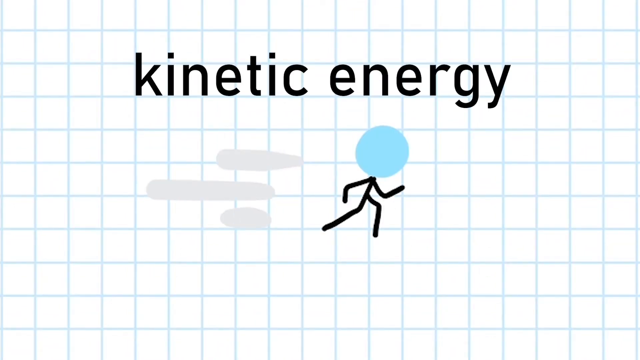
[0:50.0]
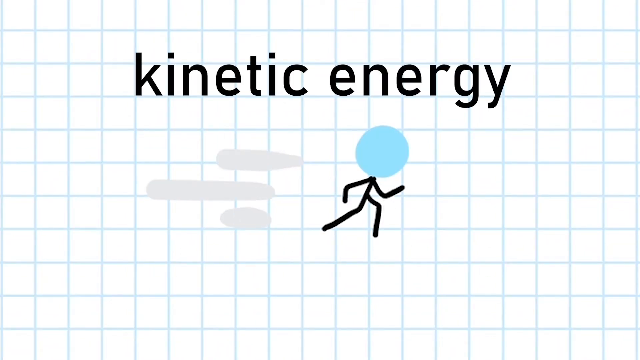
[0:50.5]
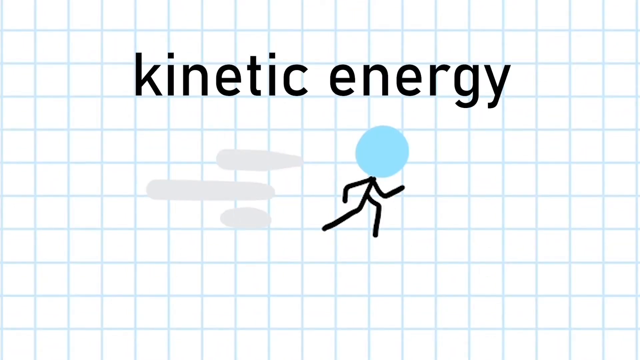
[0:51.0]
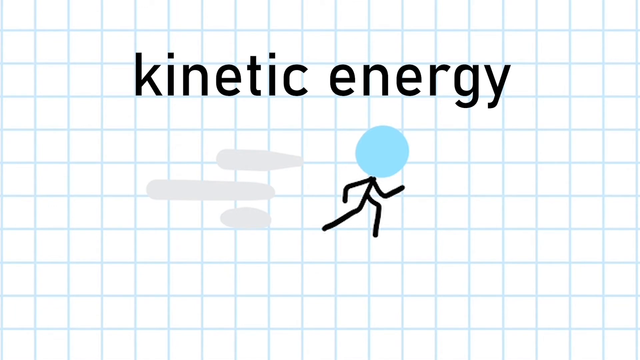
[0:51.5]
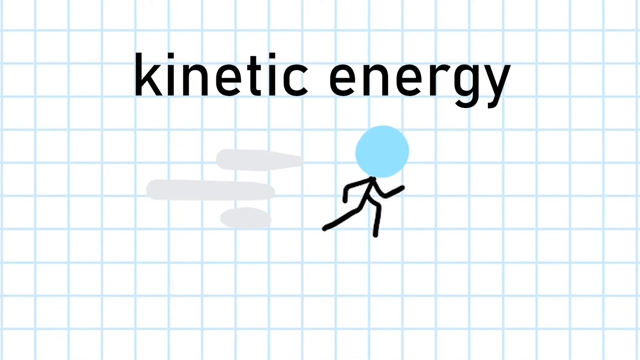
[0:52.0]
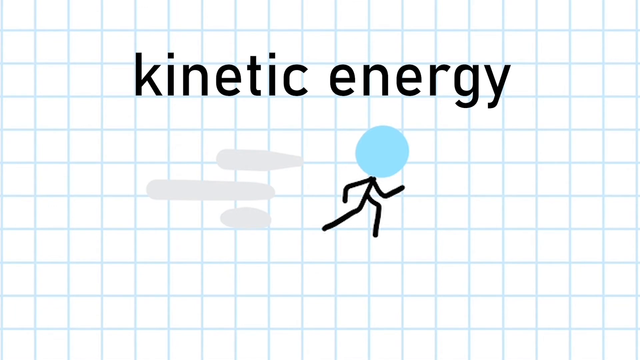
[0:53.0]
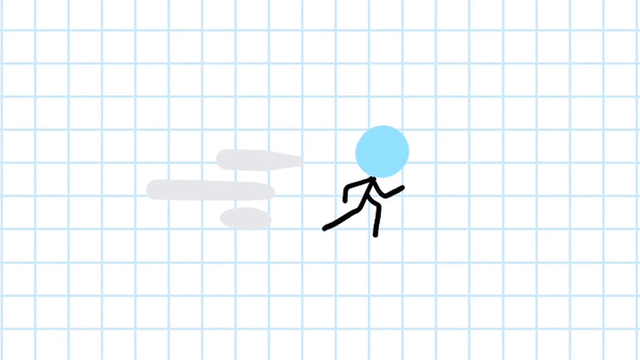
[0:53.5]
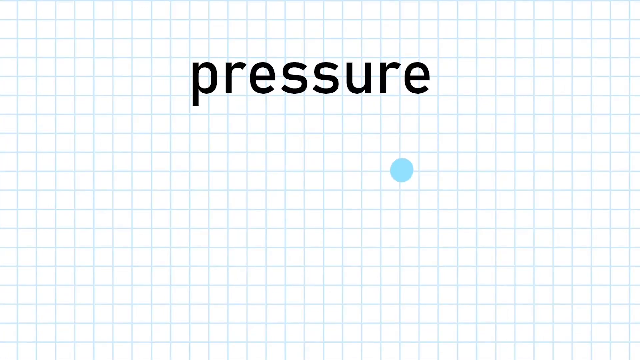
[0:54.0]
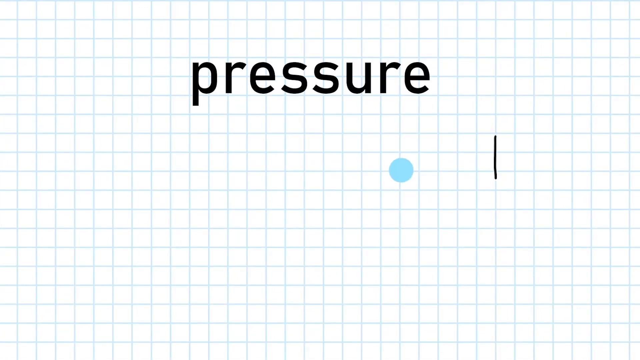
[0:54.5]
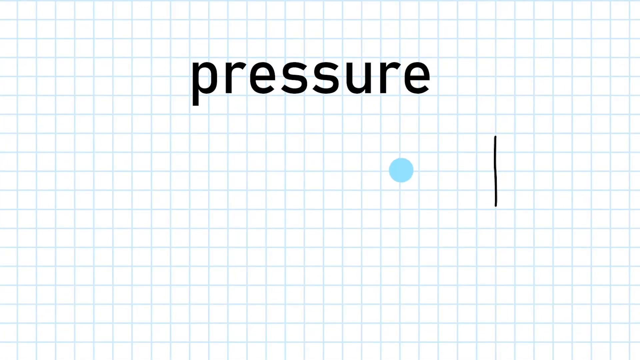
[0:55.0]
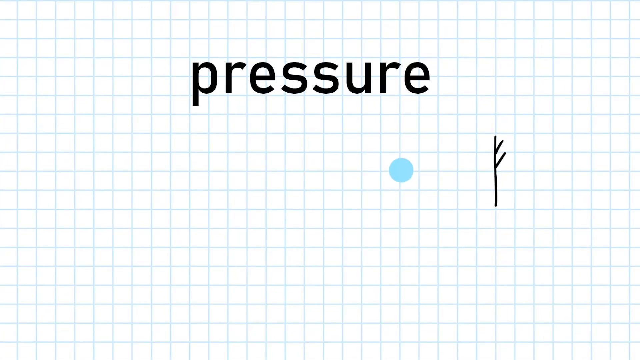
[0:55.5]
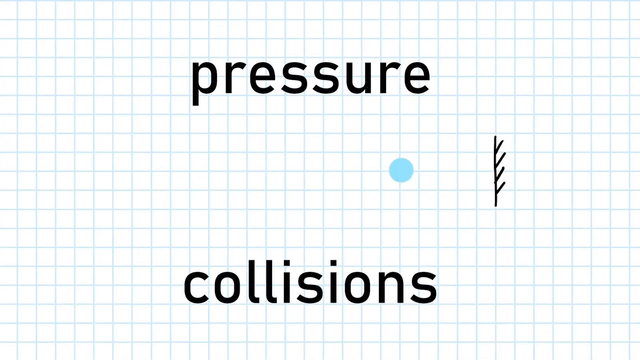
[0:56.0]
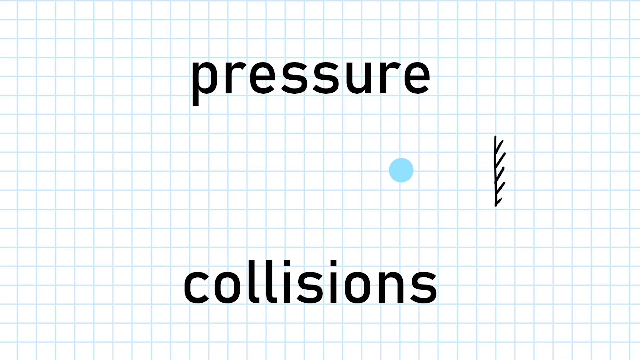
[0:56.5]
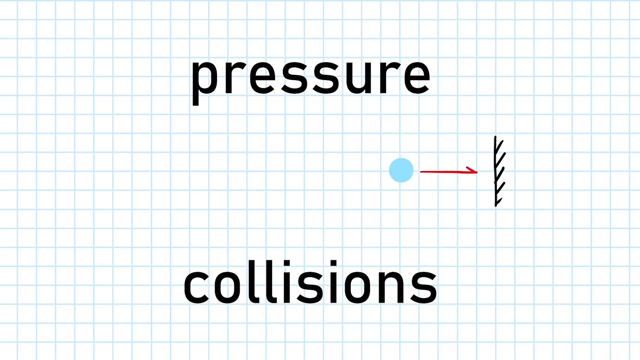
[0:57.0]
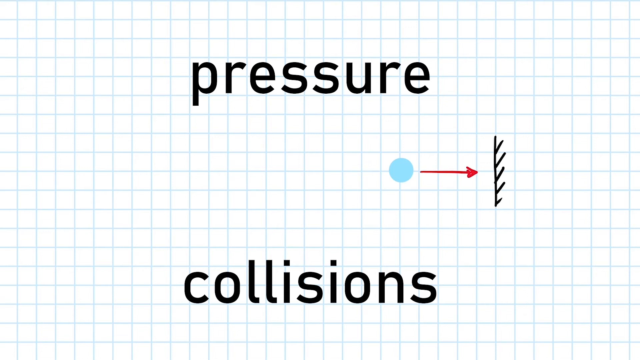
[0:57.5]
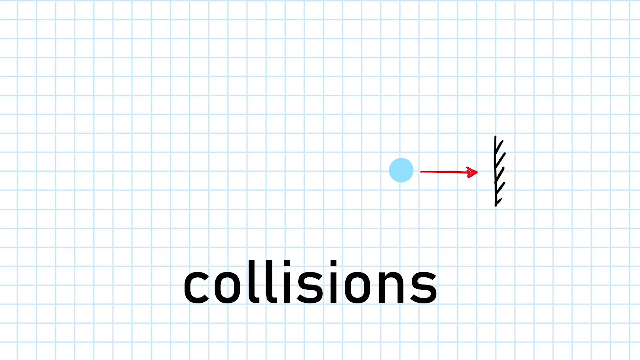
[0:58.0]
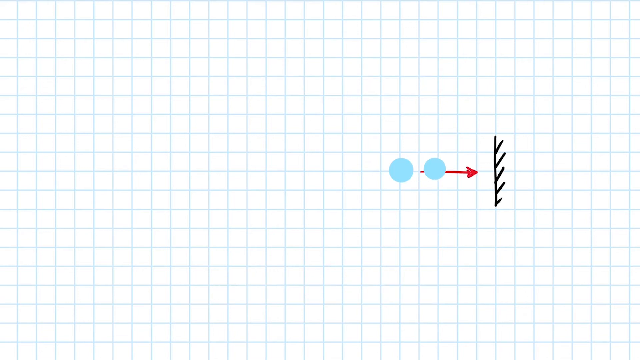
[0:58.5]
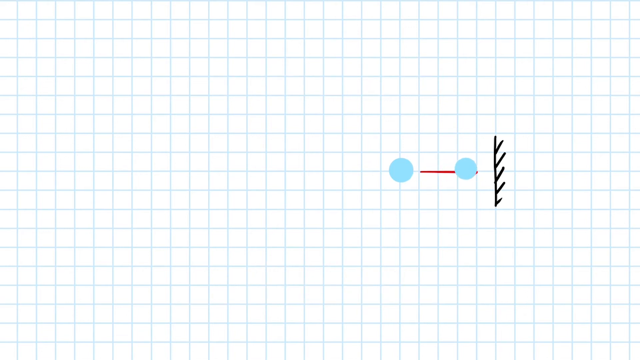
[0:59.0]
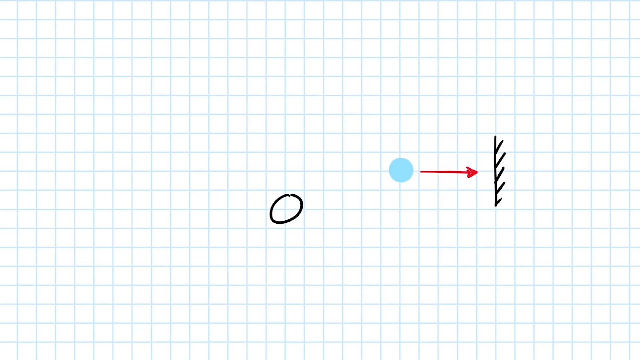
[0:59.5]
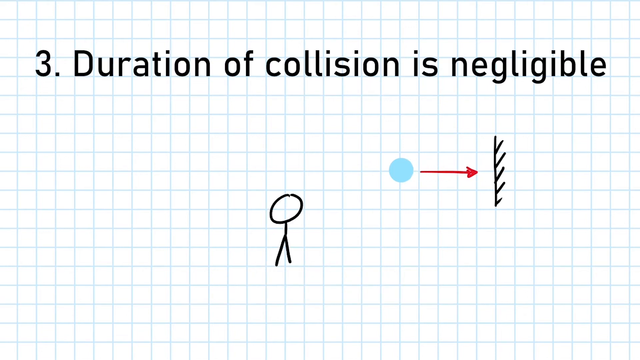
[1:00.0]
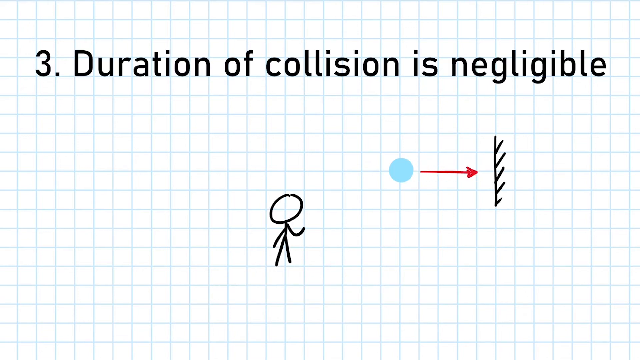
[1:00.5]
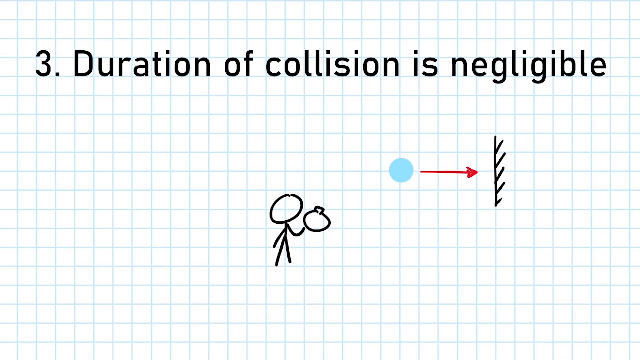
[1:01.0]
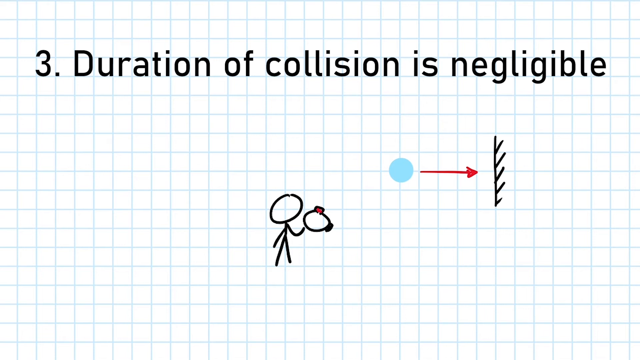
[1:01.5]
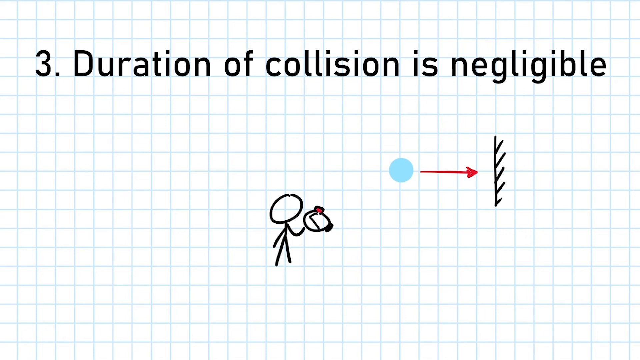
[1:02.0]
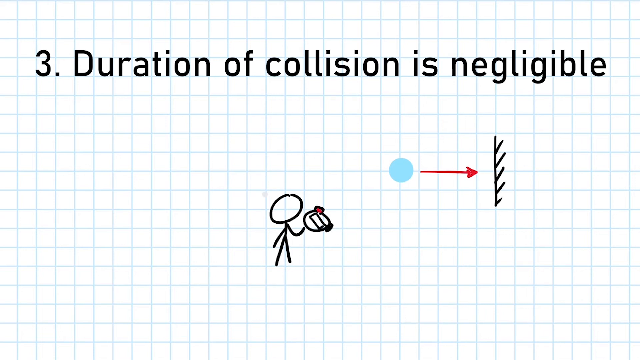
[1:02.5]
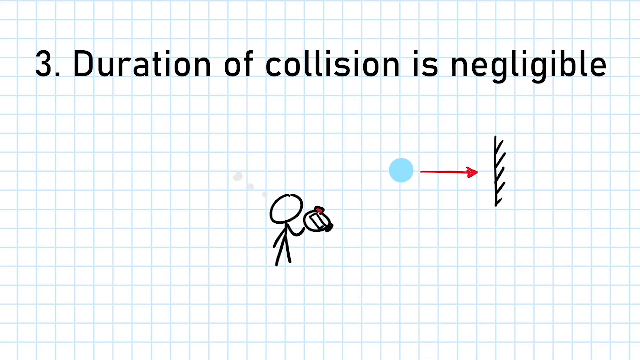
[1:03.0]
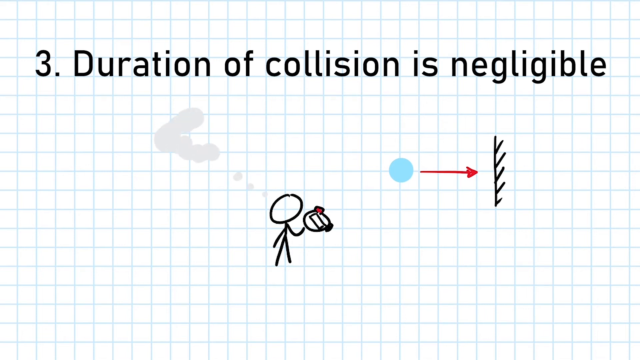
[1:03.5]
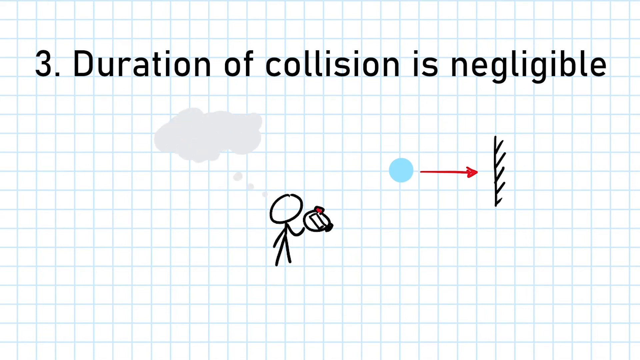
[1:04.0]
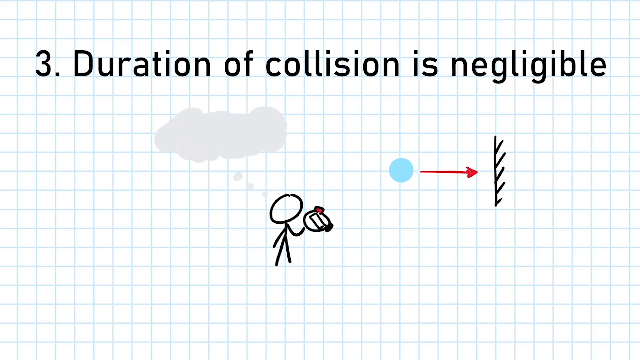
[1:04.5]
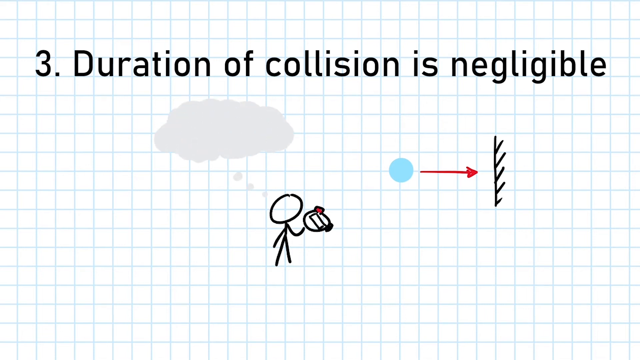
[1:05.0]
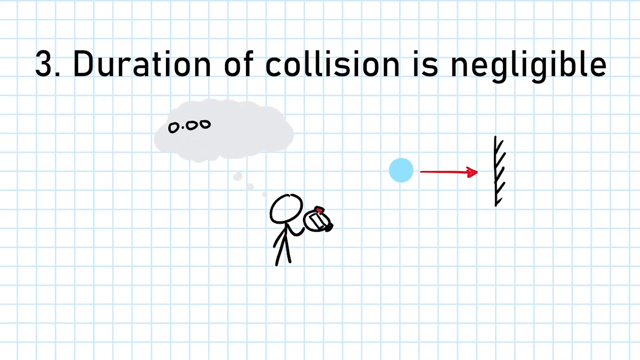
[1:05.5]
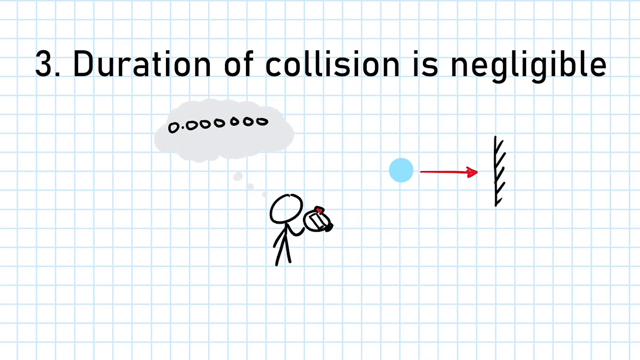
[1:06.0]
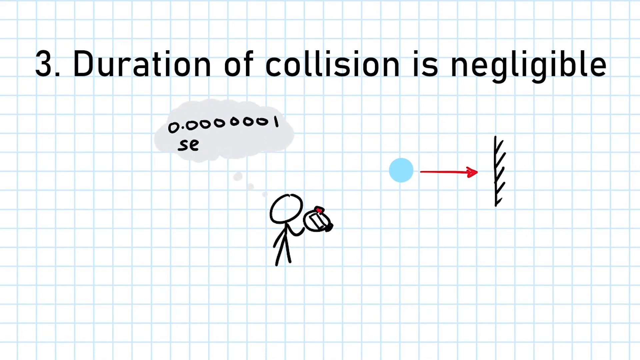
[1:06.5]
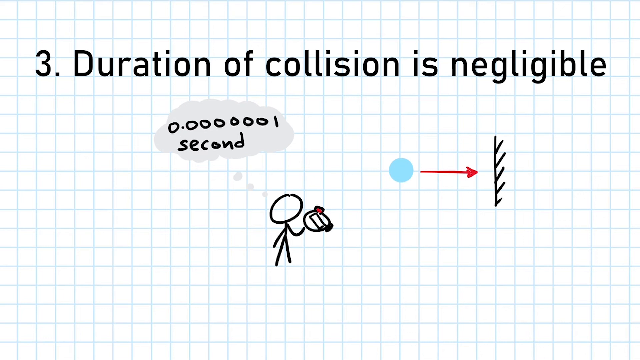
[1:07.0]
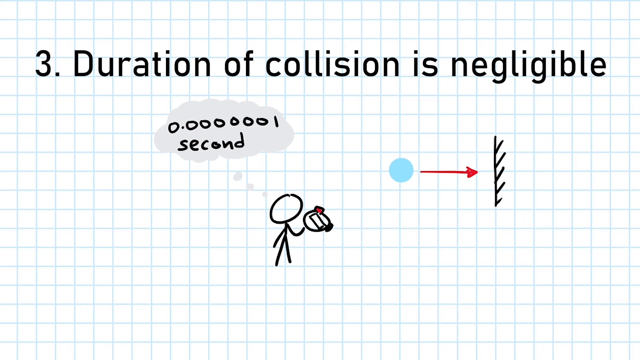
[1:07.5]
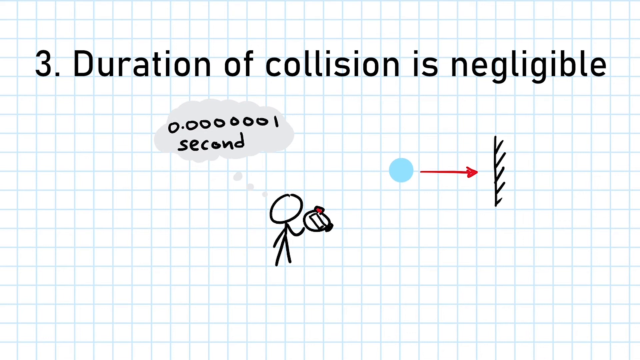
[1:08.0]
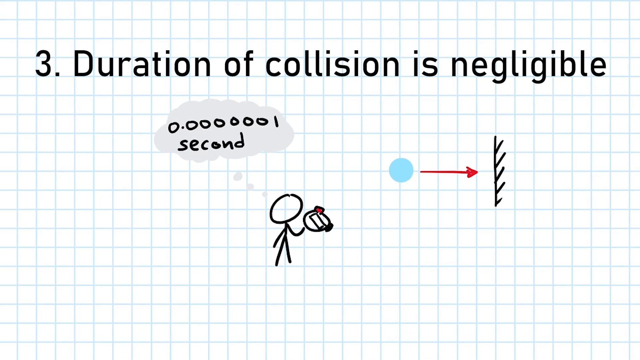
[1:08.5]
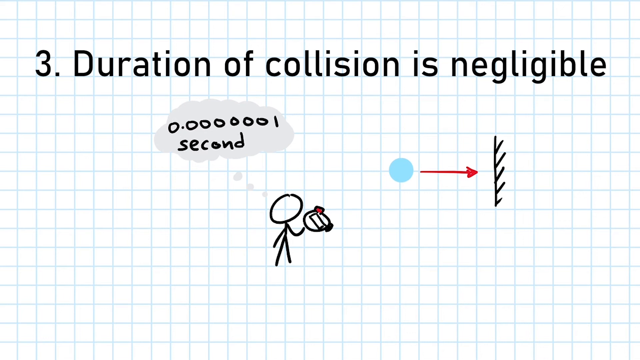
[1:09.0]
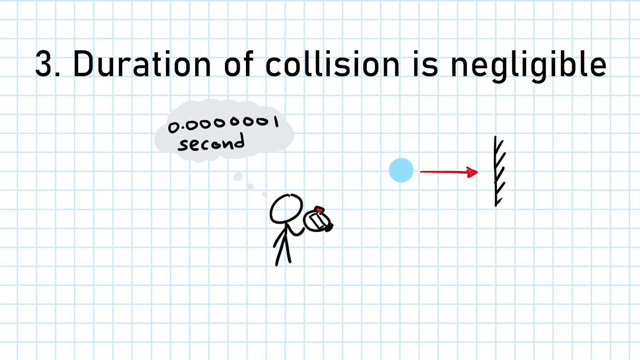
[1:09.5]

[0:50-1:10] The stick man is shown running, with "kinetic energy" at the top. Gray streaks flow to the left behind him to show that he is running and that there is wind behind him. His whole face is blue. Next, "pressure" appears at the top and "collisions" at the bottom, and blue circles move toward a black object that appears to be a sort of rail; the blue ball bounces off it and comes back. Number three then appears: "duration of collision is negligible". The stick man at the bottom has something in his left hand.